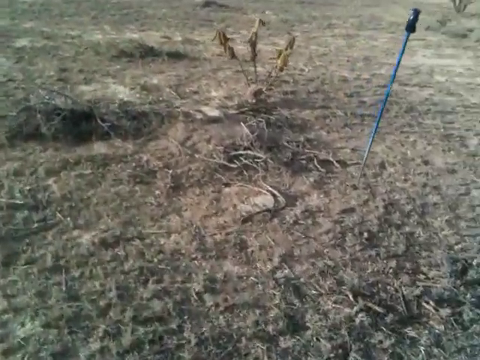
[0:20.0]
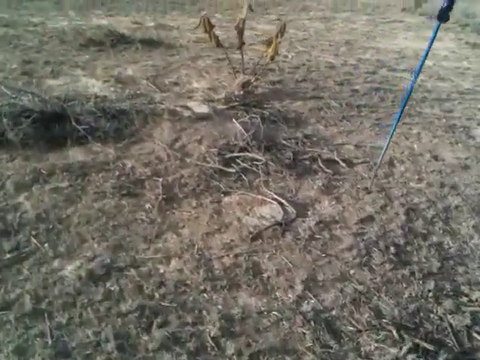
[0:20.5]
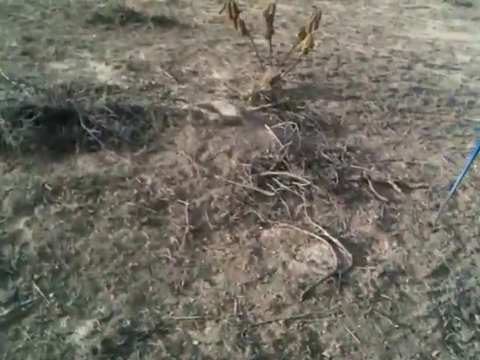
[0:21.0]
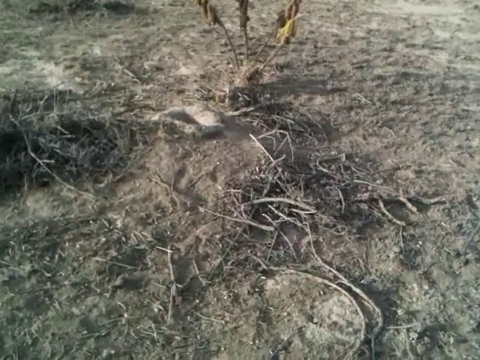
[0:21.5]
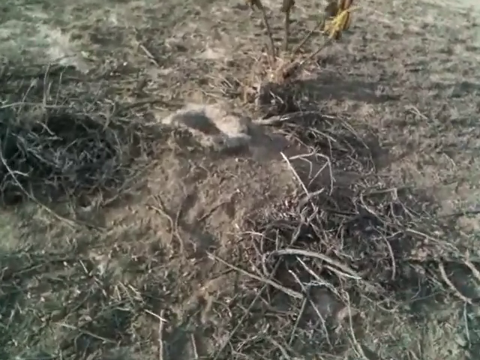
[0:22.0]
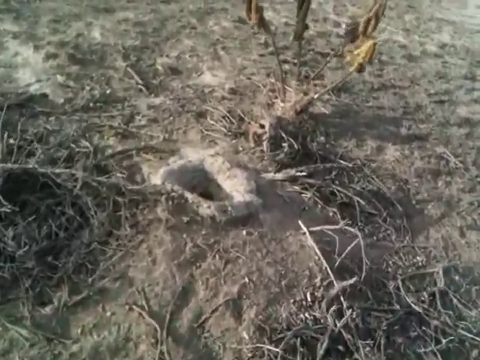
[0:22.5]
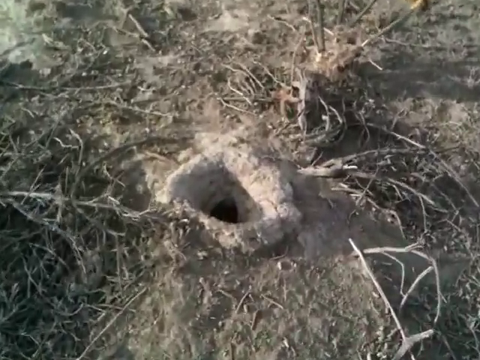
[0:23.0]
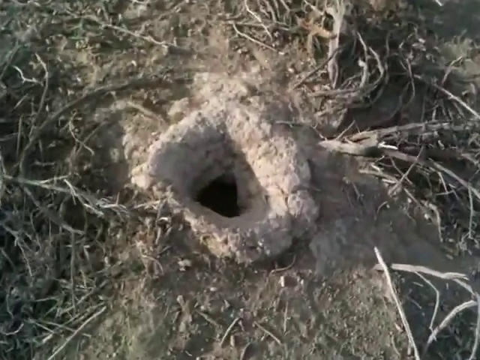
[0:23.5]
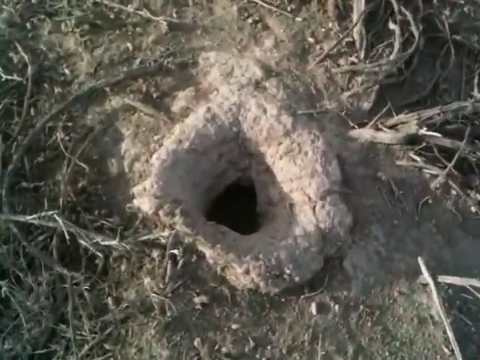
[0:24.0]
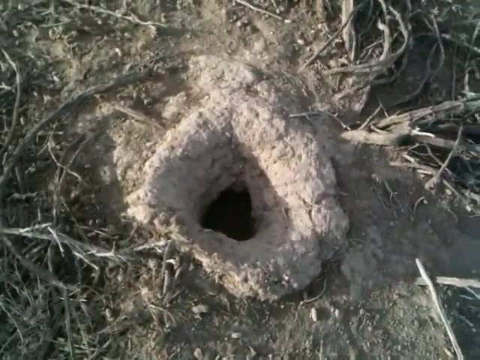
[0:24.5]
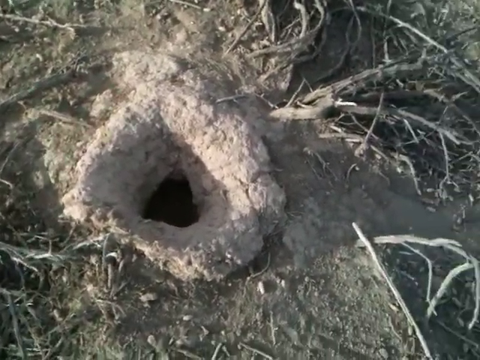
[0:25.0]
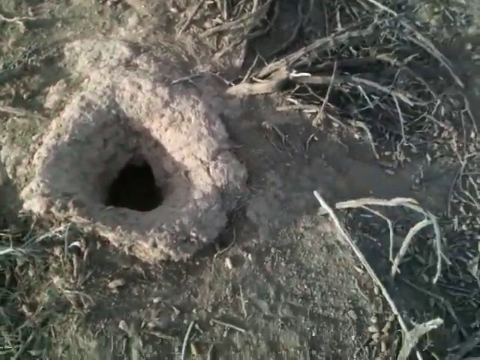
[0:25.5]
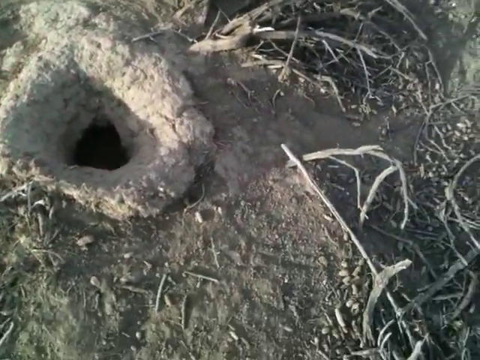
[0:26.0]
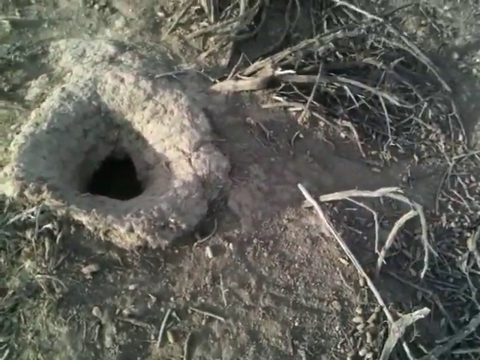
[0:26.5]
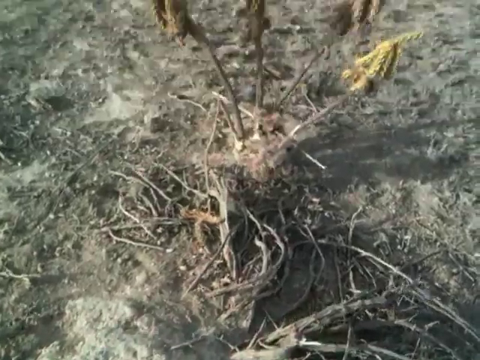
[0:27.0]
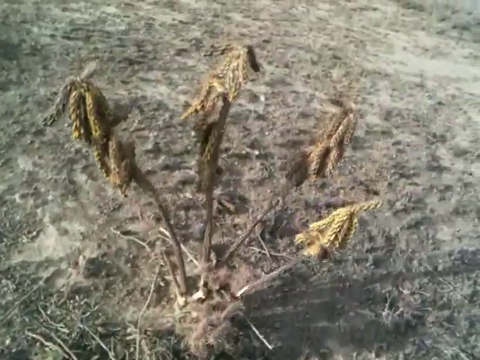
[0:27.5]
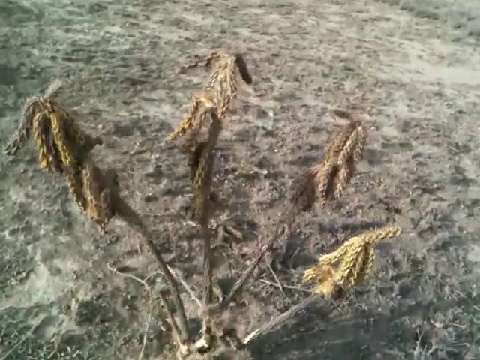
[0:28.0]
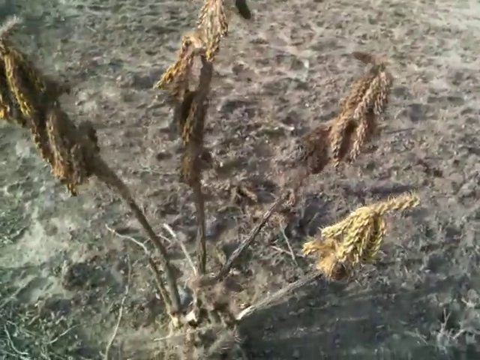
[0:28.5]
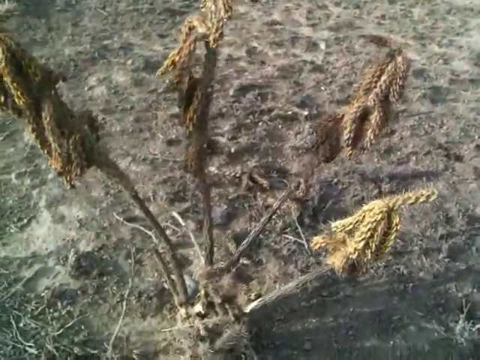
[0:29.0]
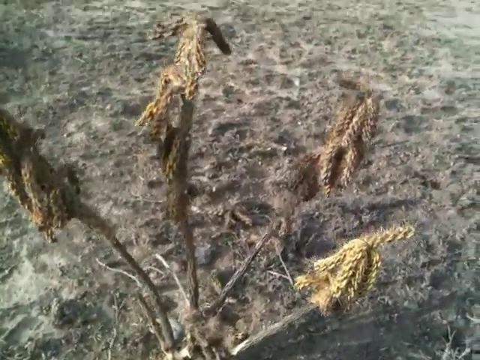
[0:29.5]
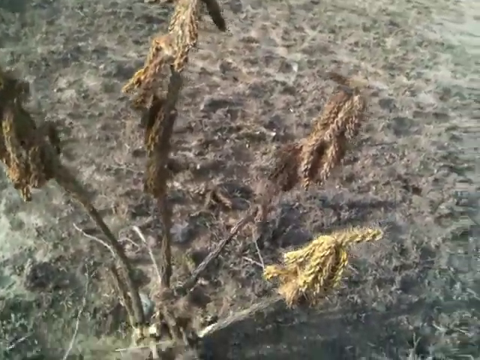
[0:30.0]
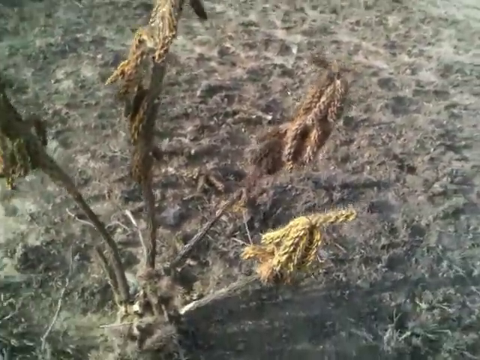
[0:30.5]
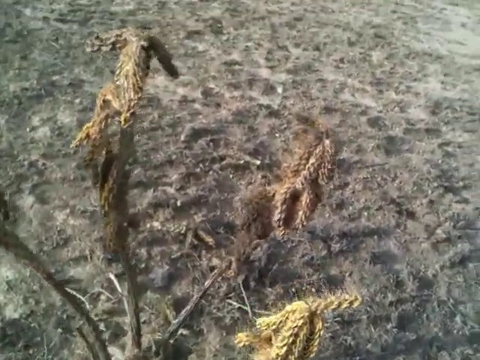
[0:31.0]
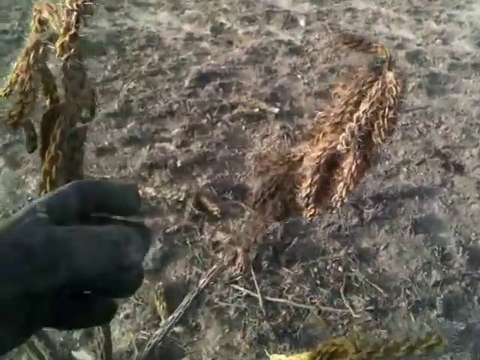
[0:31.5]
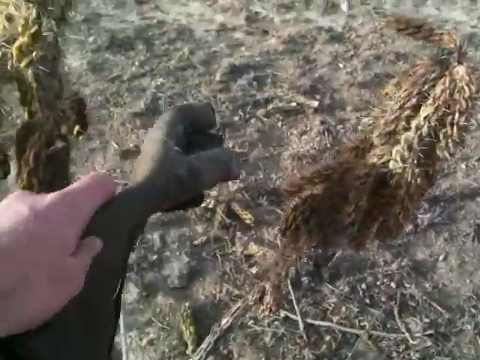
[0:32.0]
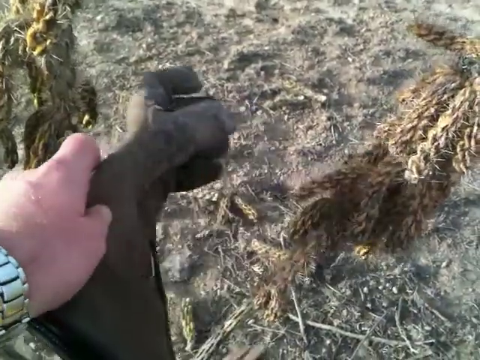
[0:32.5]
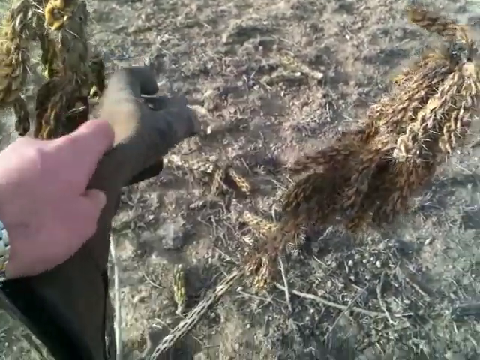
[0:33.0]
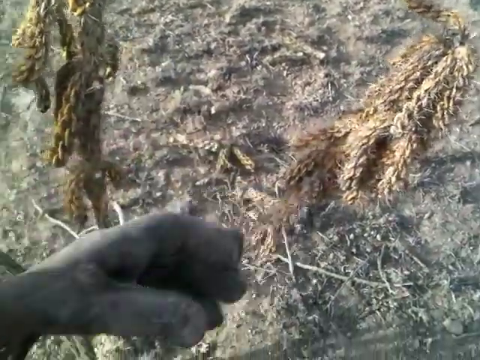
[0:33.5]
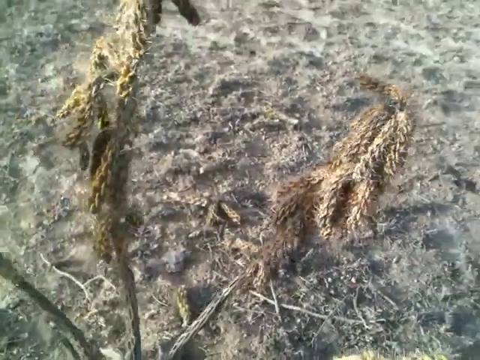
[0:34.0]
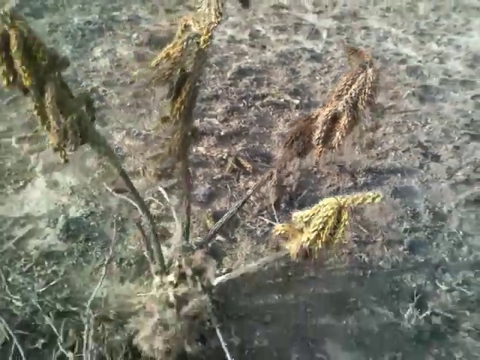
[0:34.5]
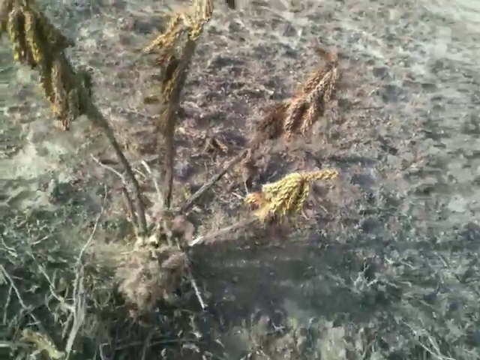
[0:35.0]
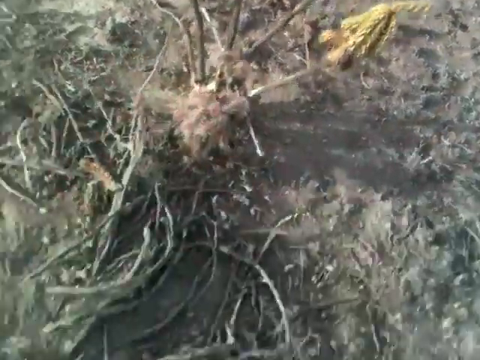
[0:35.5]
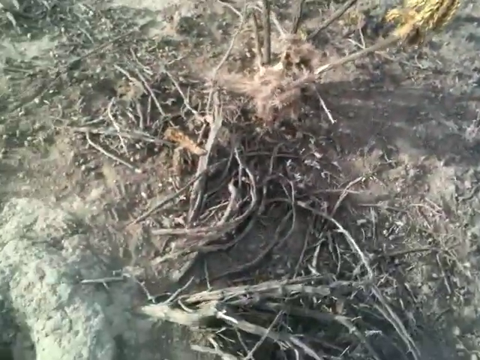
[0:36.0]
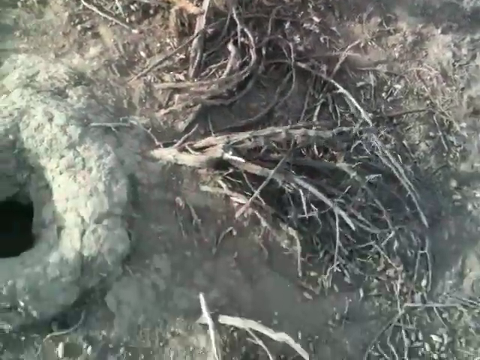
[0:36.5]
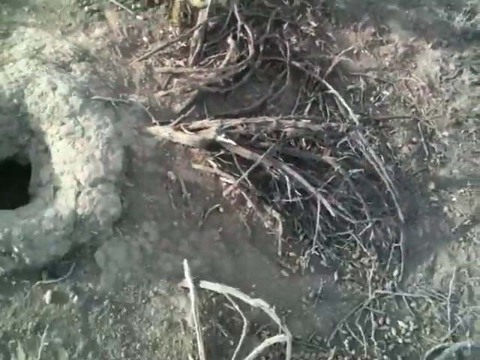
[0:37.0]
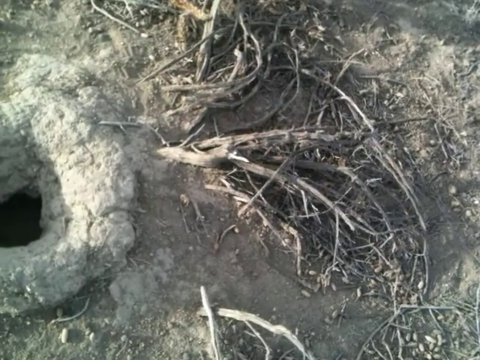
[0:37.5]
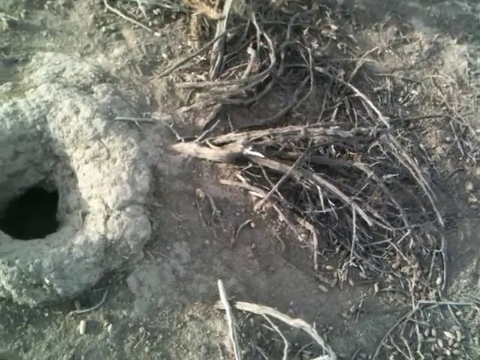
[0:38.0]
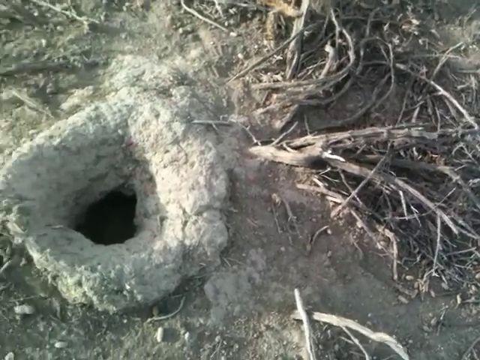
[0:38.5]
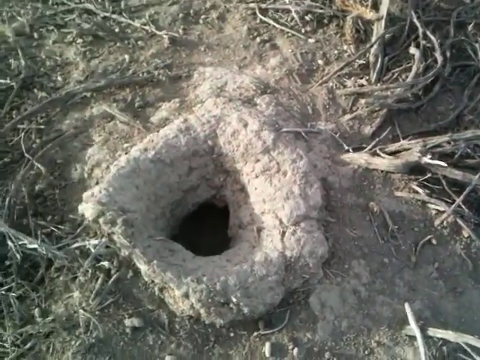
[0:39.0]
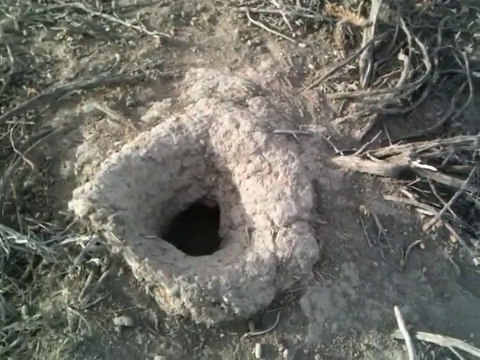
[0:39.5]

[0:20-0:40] The ground shown has no grass on it, just soil and some dead plants. A blue rod with a black handle is stuck in the ground. The person with the camera moves toward a plant on the ground that looks like it is about to die; it has no leaves and looks dry. On the side of the plant there is a dug hole, dark inside and looking deep. The camera is not steady and shakes as the person holding it moves. The person points at the plant with their glove. The pointing hand, on the left side, wears a silver watch and looks like a man's hand.